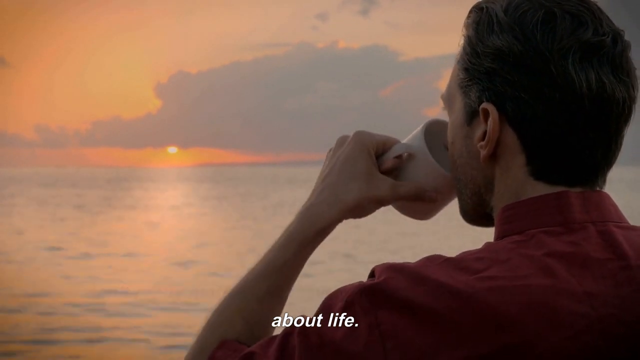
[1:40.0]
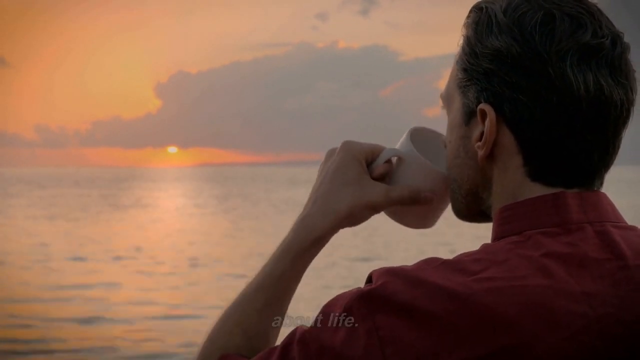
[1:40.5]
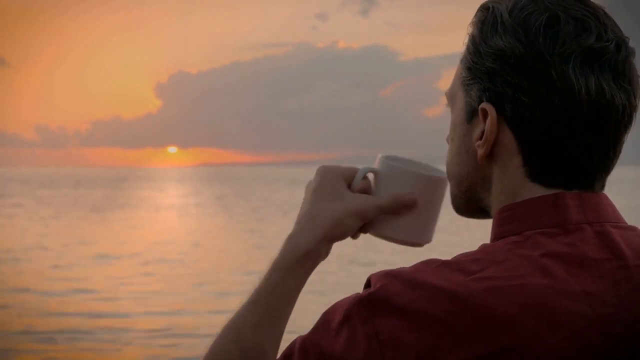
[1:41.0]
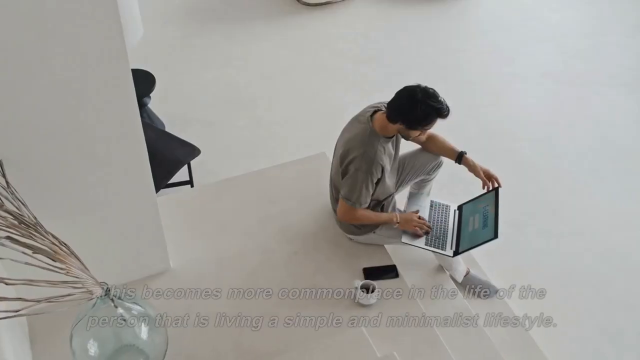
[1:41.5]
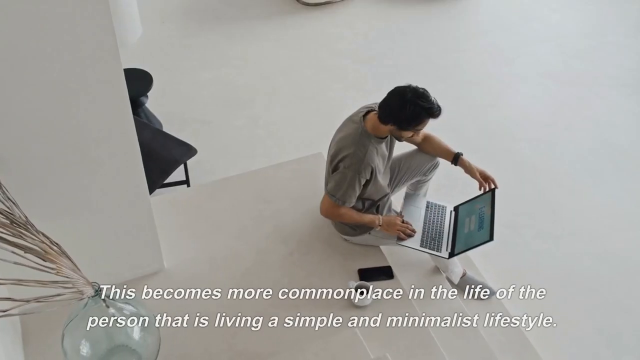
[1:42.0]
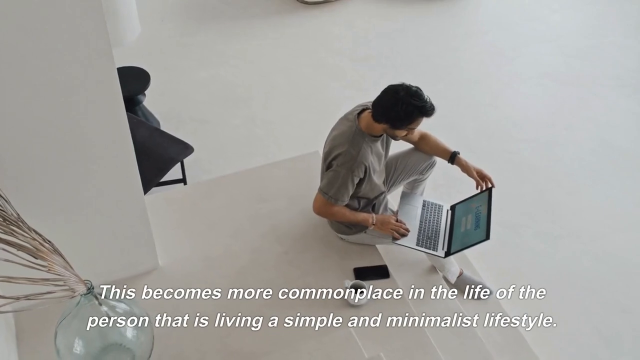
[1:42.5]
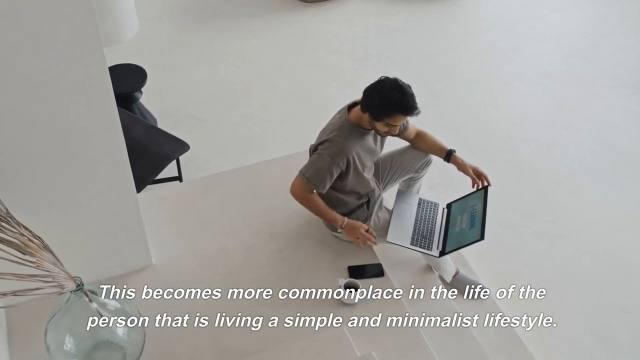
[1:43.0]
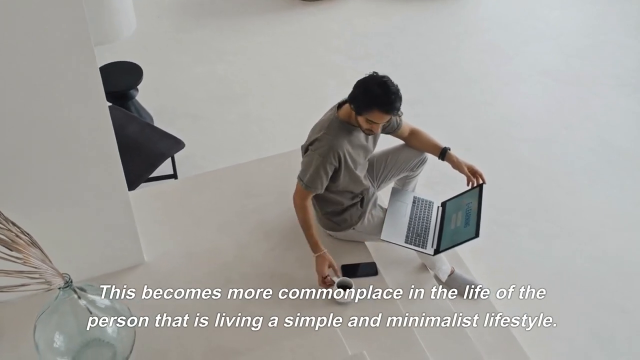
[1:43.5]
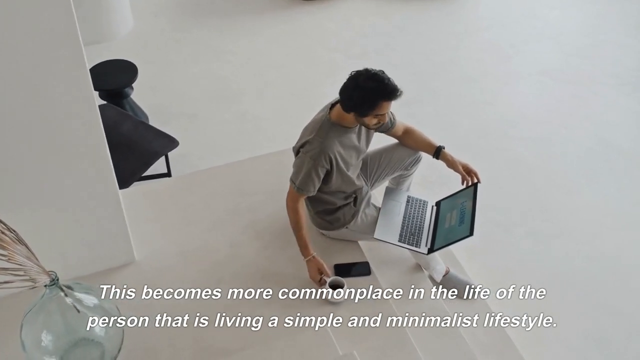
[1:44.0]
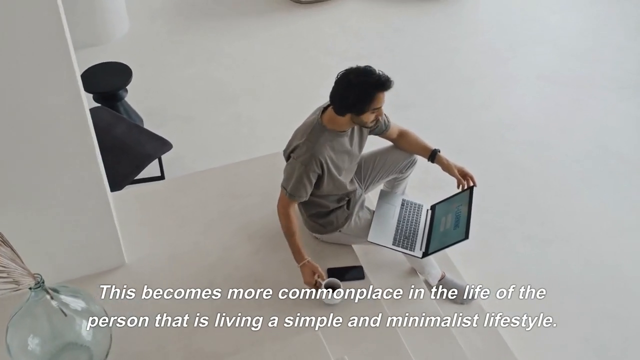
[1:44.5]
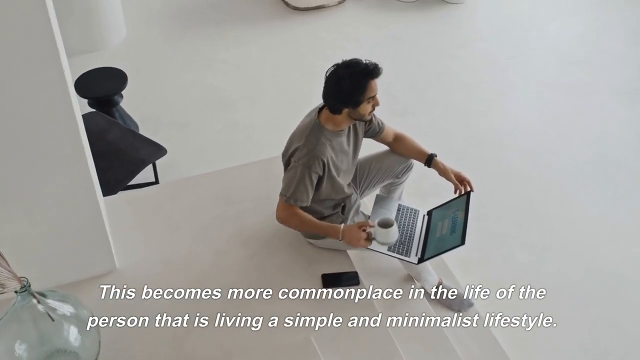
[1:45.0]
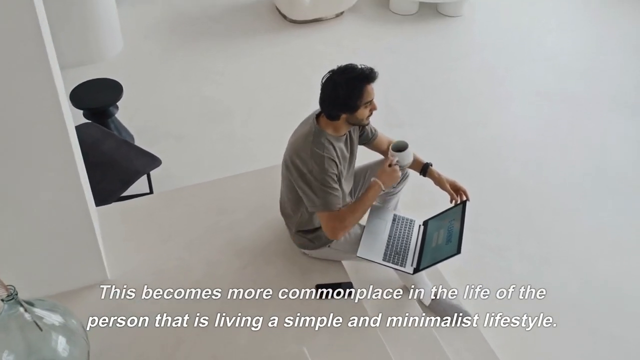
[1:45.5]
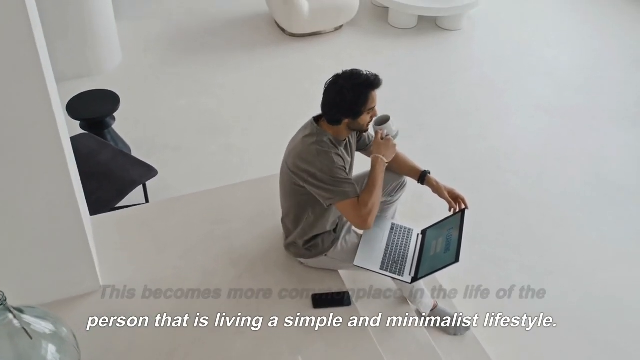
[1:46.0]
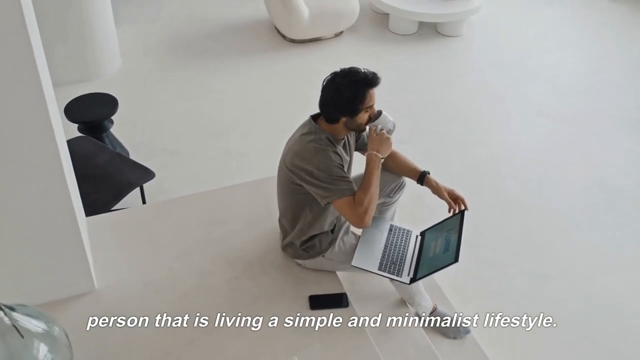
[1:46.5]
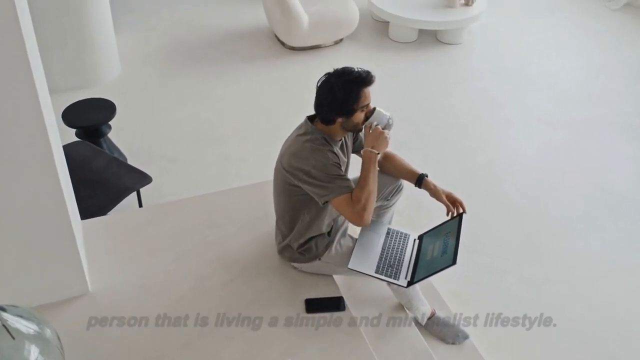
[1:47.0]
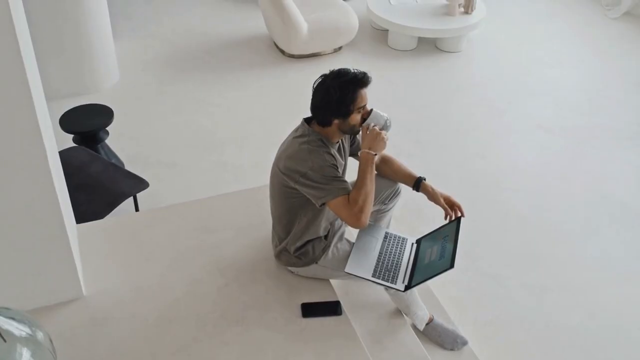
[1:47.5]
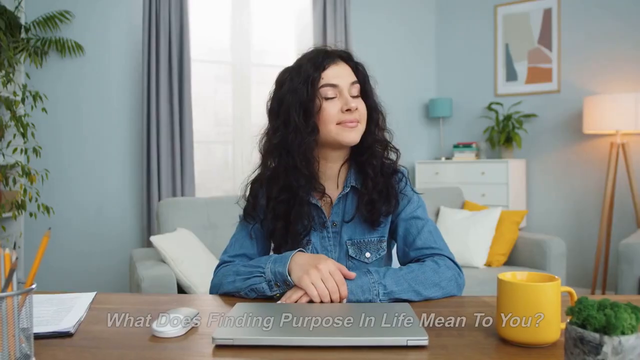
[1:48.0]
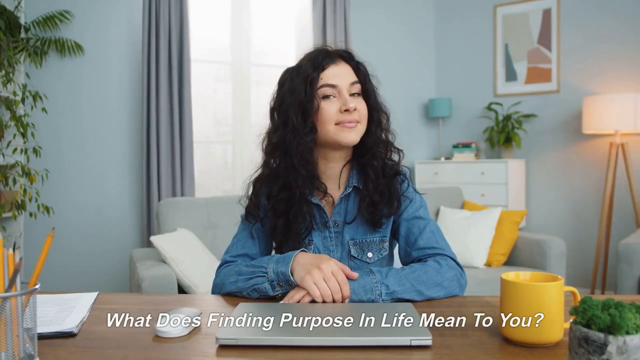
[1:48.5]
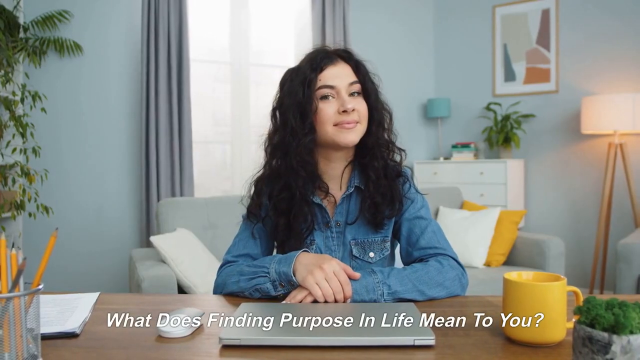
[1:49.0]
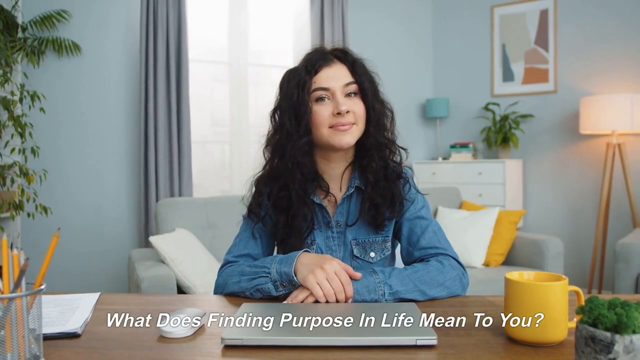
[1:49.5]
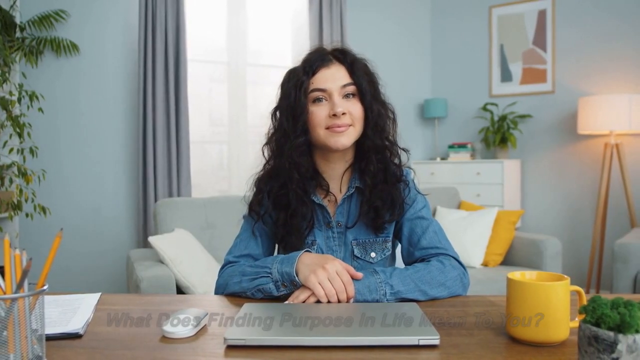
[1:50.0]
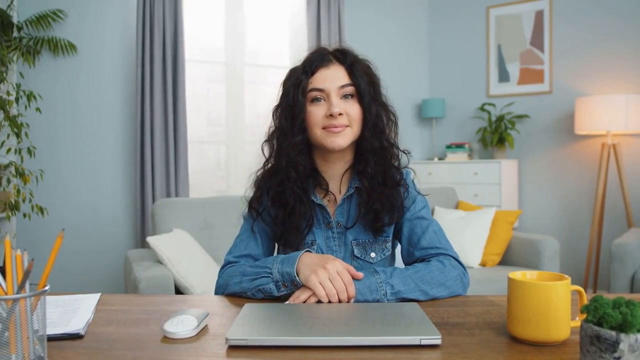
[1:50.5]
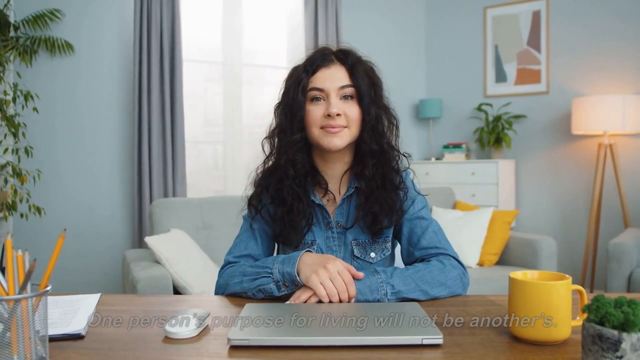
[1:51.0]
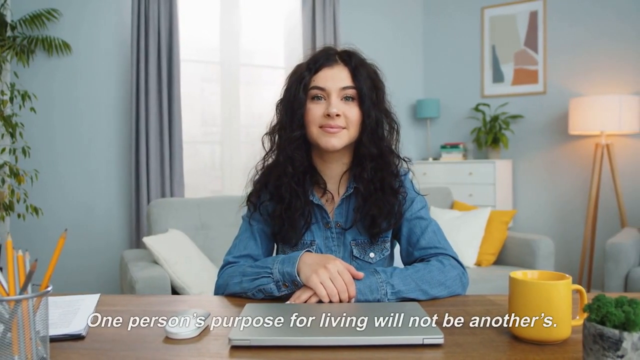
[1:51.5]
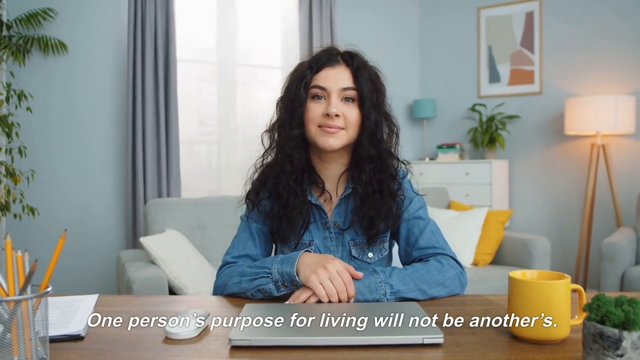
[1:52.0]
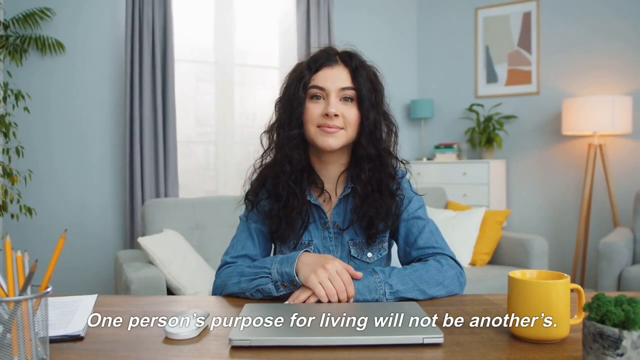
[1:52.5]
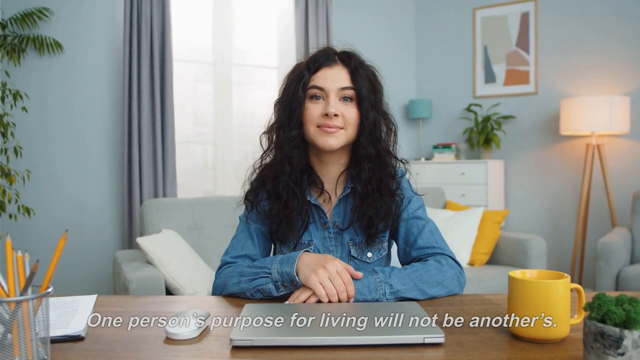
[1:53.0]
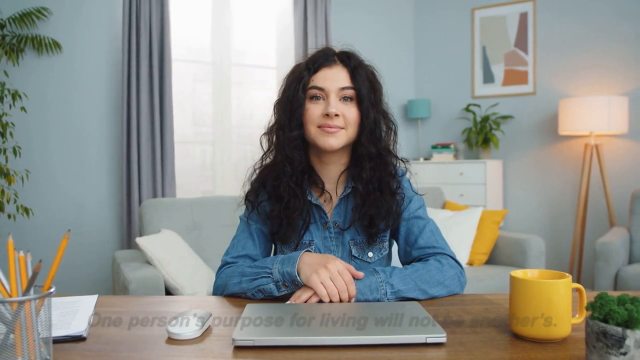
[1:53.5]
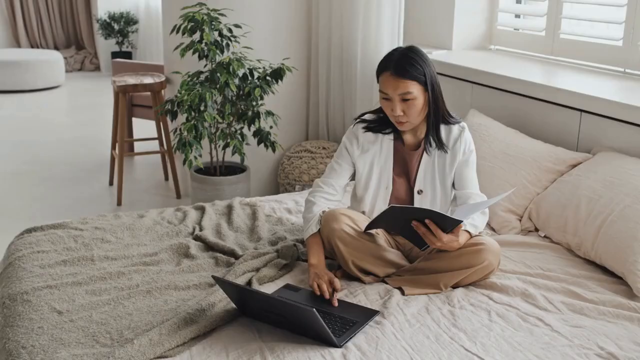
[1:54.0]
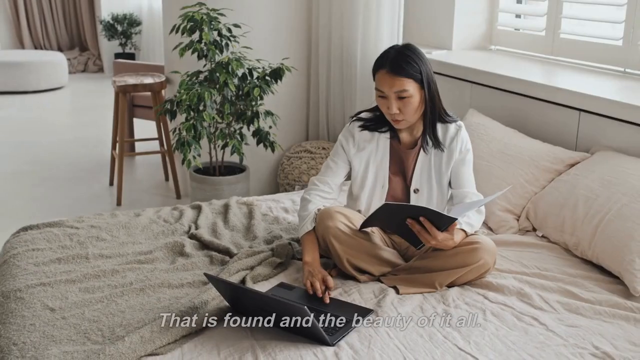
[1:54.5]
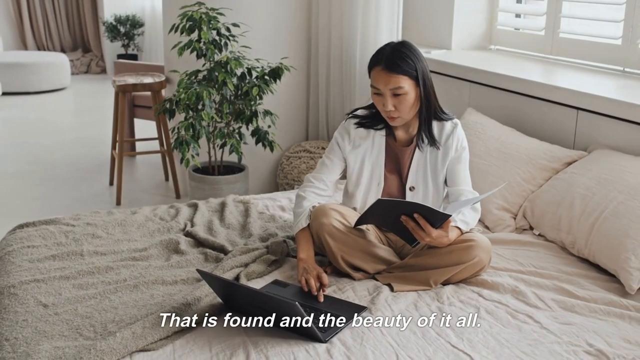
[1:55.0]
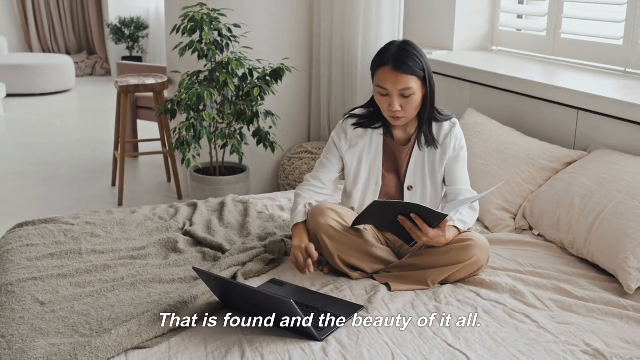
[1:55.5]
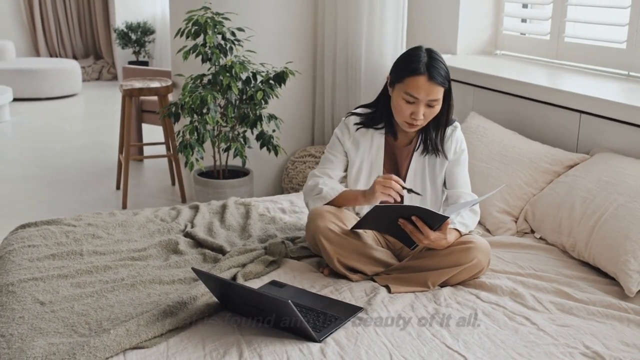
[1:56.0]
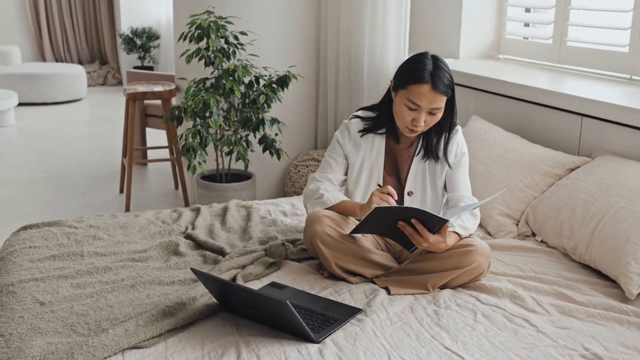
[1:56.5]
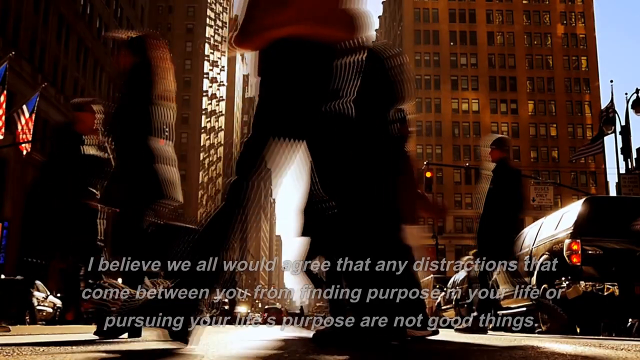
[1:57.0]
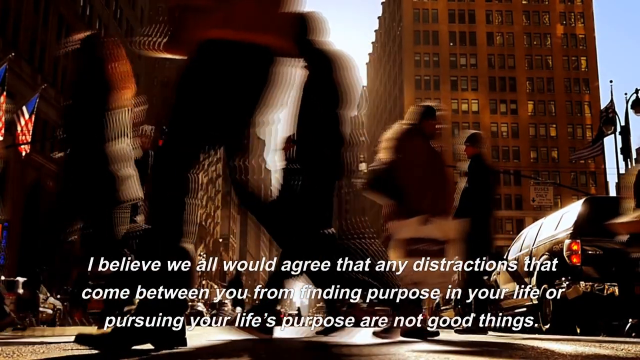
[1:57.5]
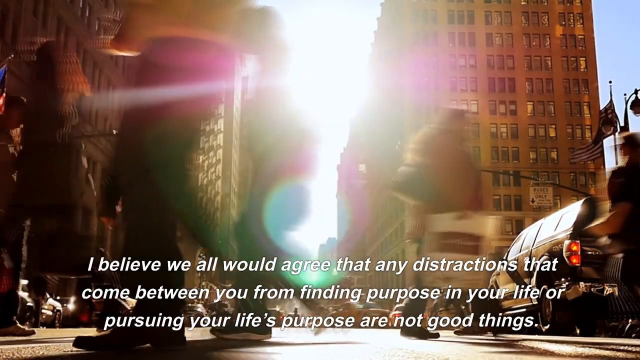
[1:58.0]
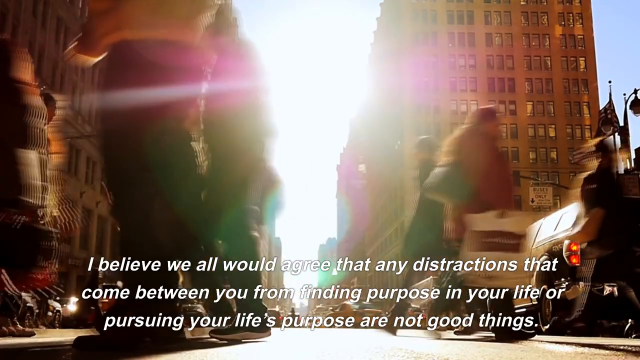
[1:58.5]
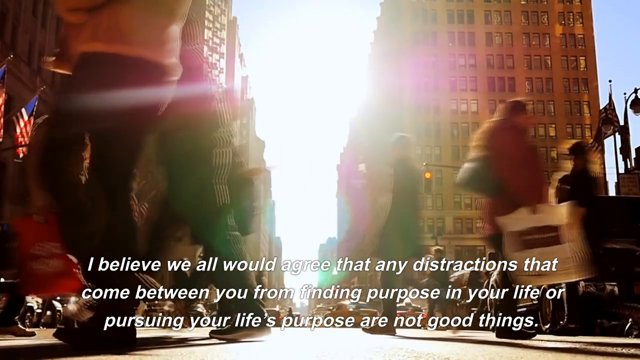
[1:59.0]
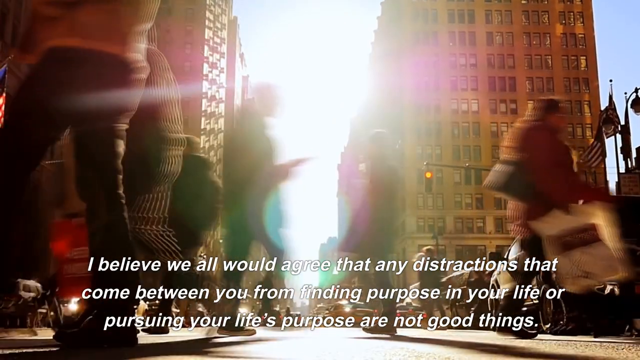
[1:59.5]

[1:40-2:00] The man is looking out to sea. The scene shifts immediately to a man sitting on the stairs in an all-white room with white floors, white walls and white furniture. He has a laptop on his knee, a phone next to him and a cup of coffee. The text reads: "this becomes more commonplace in the life of the person that is living a simple and minimalist lifestyle." Next, a woman who is probably about 20, with long black hair, looks contented sitting in a room with pale blue walls and minimalist furniture while the text asks: "what does finding purpose in life mean to you?" The next statement is: "one person's purpose for living will not be another's." An Asian woman then sits on her bed doing some work in front of her laptop, and the scene shifts to a cityscape in the USA as the text reads: "I believe we all would agree that any distractions that come between you from finding purpose in your life or pursuing your life's purpose are not good things."